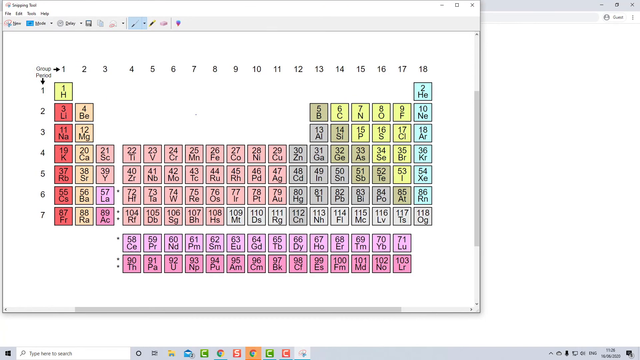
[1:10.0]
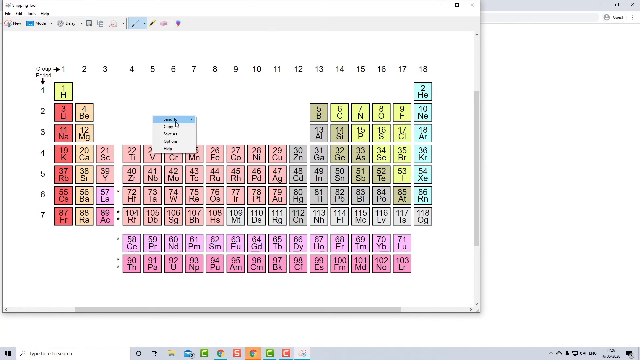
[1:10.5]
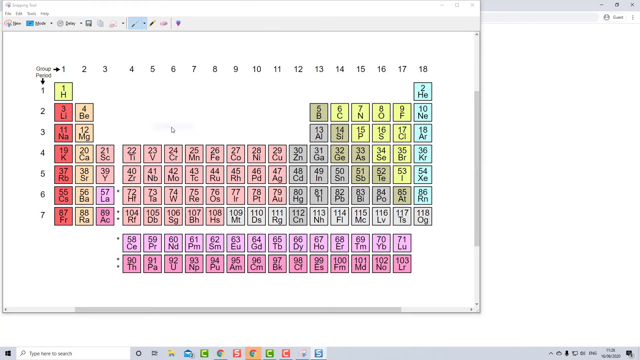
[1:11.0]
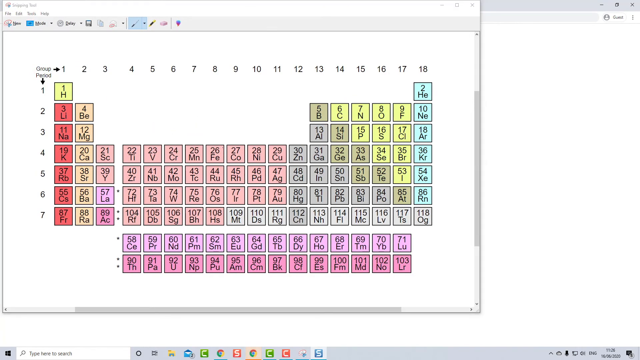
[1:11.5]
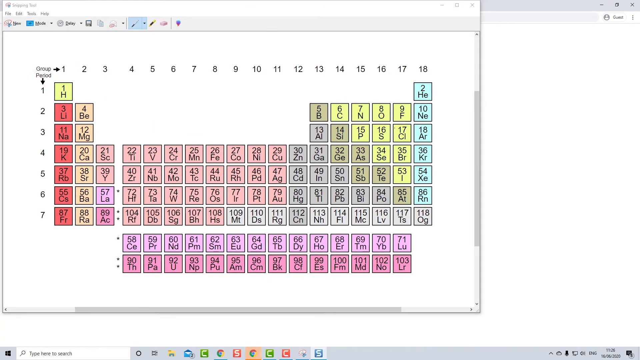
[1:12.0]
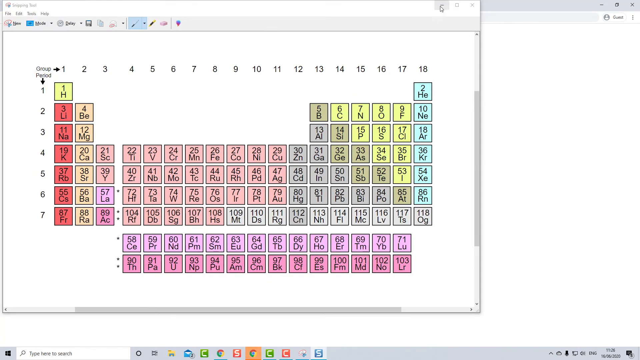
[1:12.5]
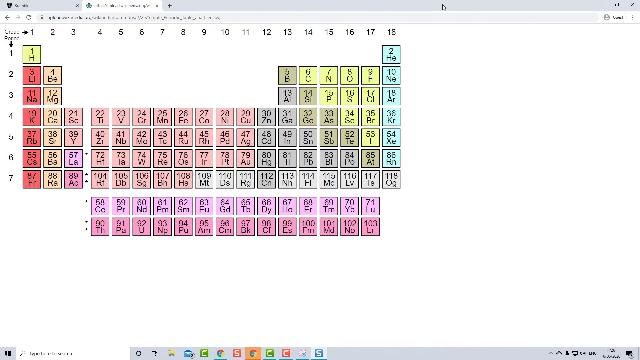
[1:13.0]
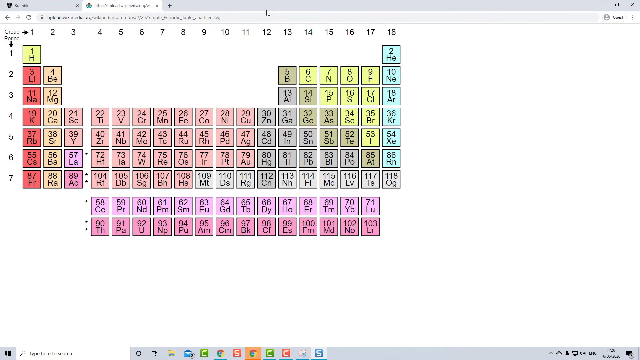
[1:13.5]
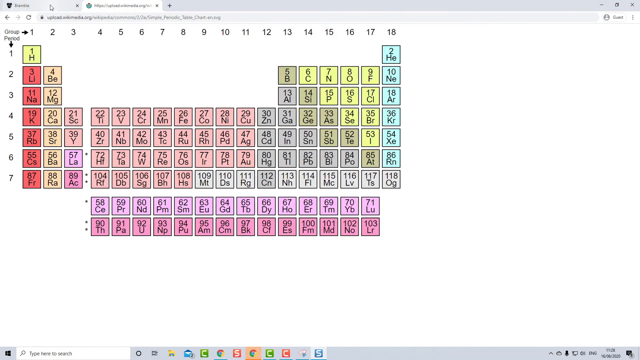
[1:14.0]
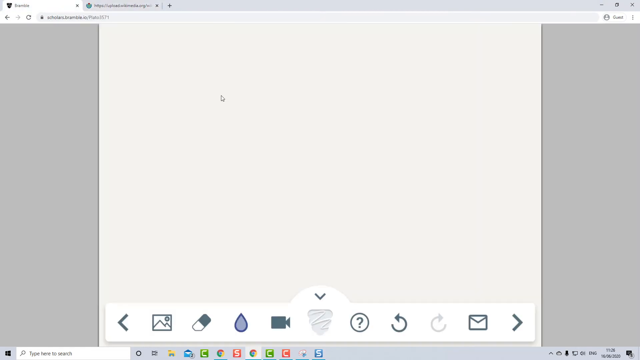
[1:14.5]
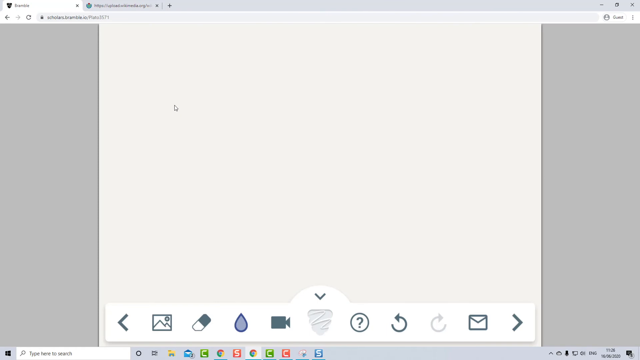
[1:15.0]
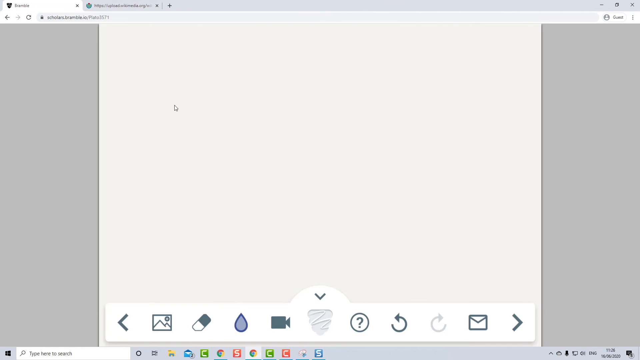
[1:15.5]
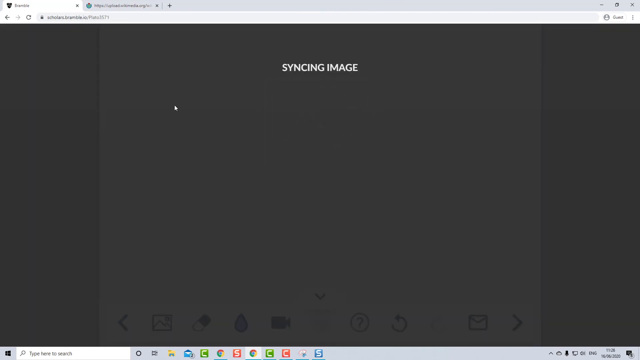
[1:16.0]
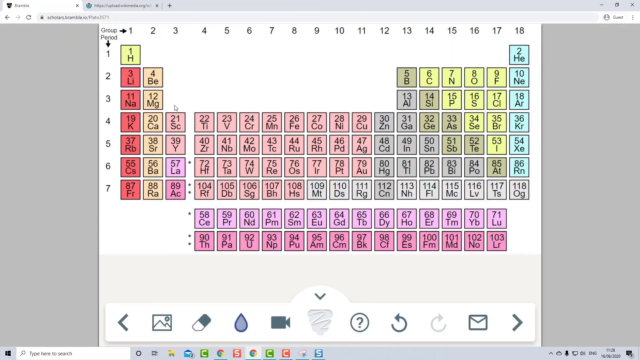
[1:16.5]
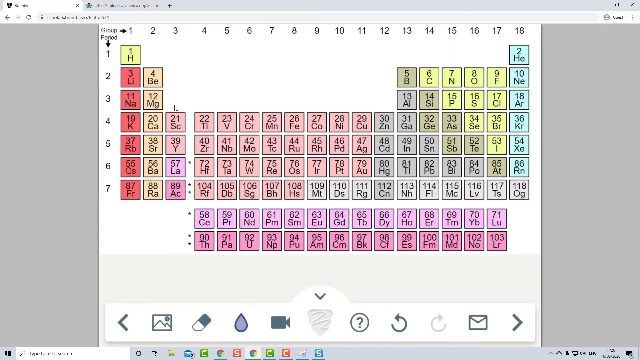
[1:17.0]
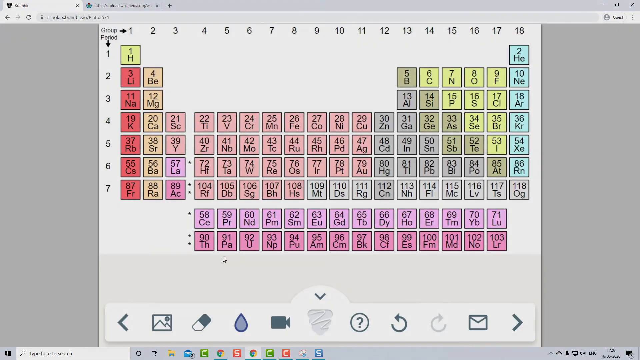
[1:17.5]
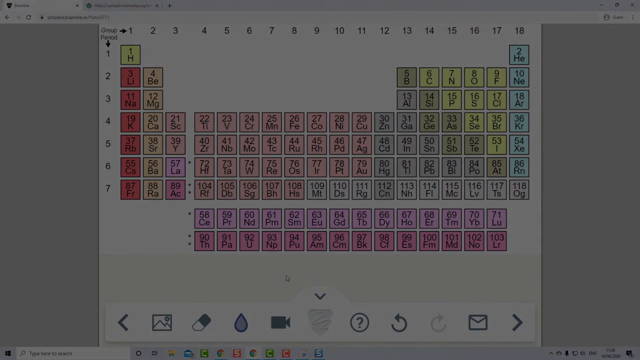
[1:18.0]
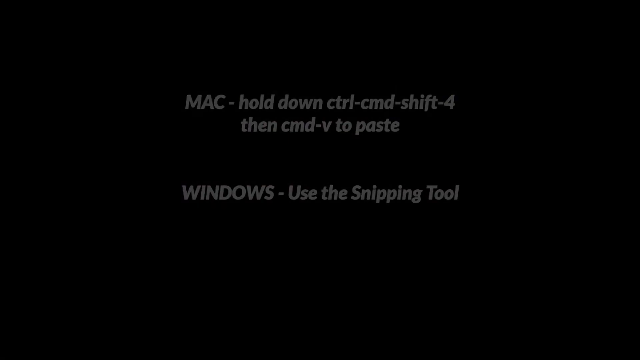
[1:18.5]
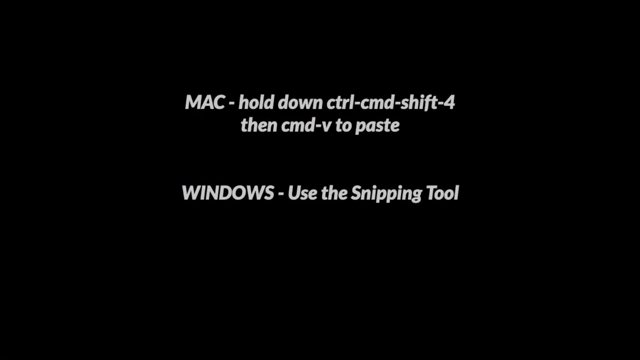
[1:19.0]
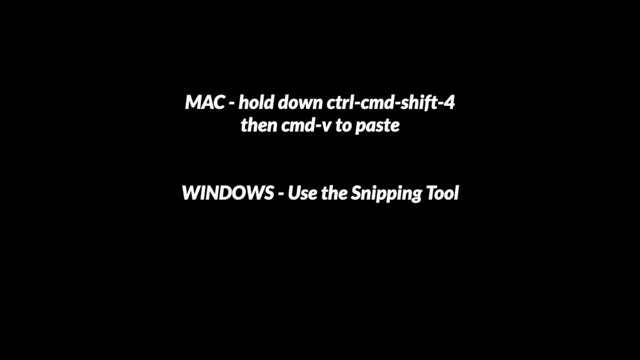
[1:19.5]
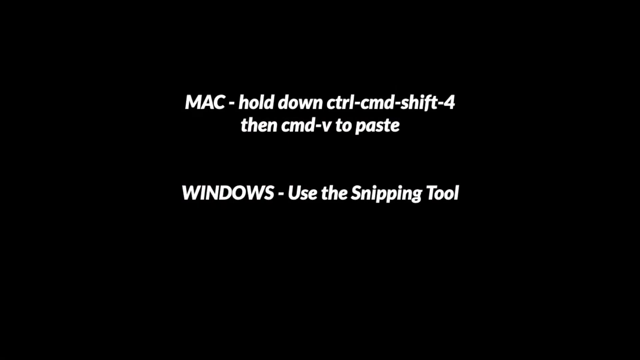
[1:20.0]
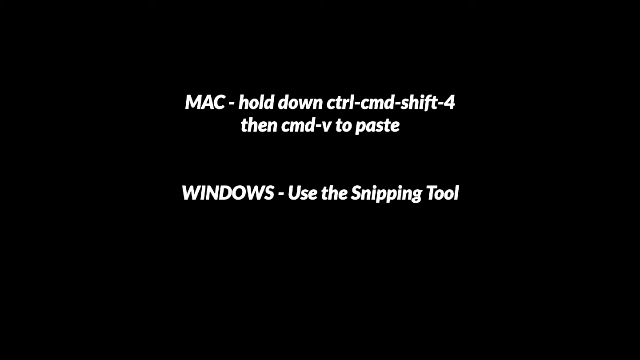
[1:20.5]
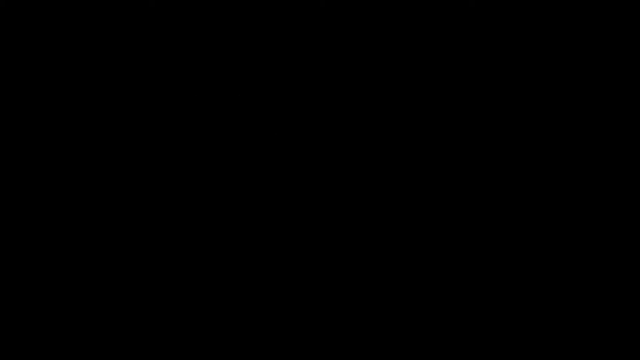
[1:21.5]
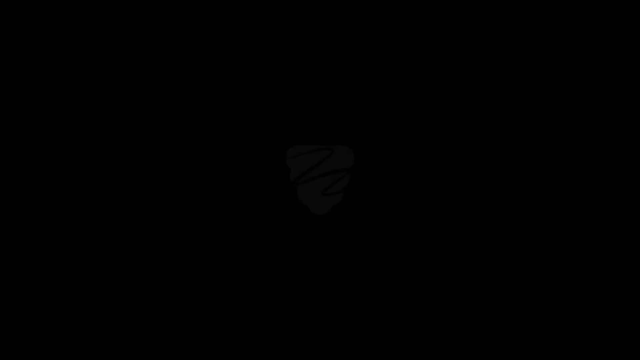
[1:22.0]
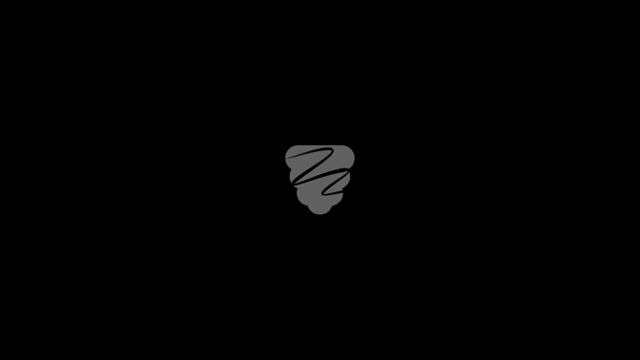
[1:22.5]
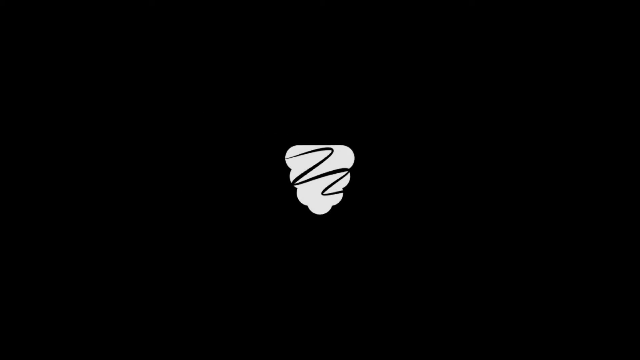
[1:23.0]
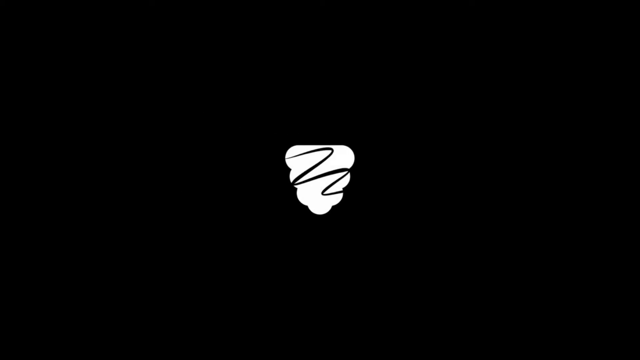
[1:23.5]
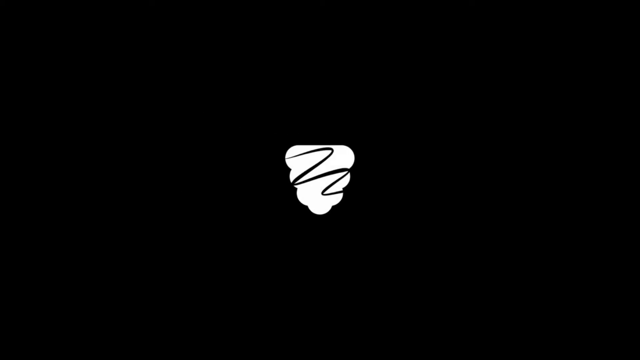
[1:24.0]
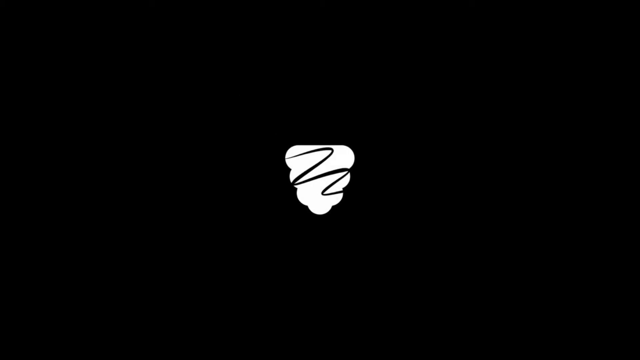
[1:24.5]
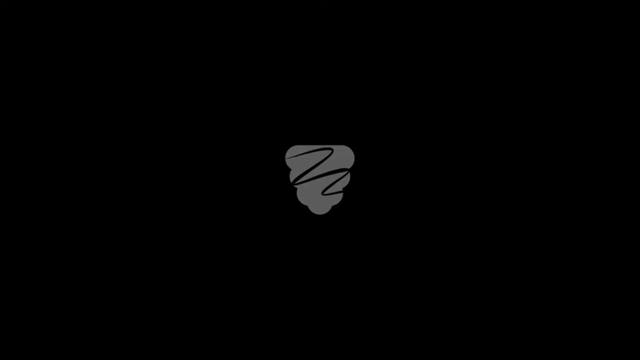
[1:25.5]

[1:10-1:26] A small item is clicked and selected. The paper then shows the sniped picture of the periodic table pasted exactly as it was where it was taken from, with the same colors and the same names, and nothing cut or removed. Next, white text appears on a black background giving instructions for Mac, including "CMD V to paste", and instructions for Windows users to use the sniping tool. A logo with black lines on a white background then appears. No hand or drawing appears, and the video does not return to the question paper.